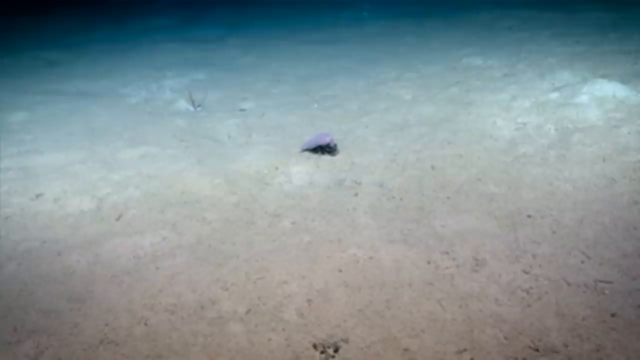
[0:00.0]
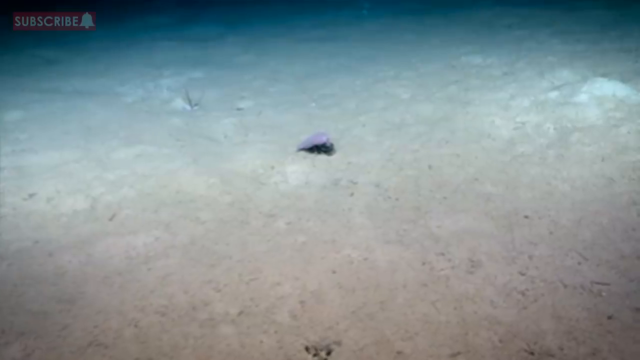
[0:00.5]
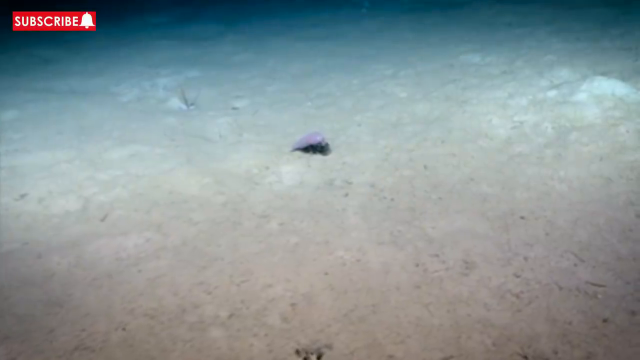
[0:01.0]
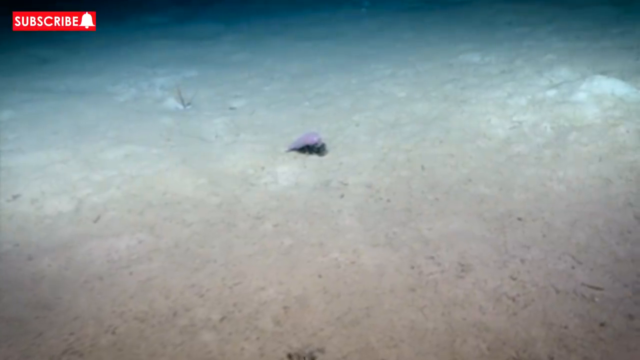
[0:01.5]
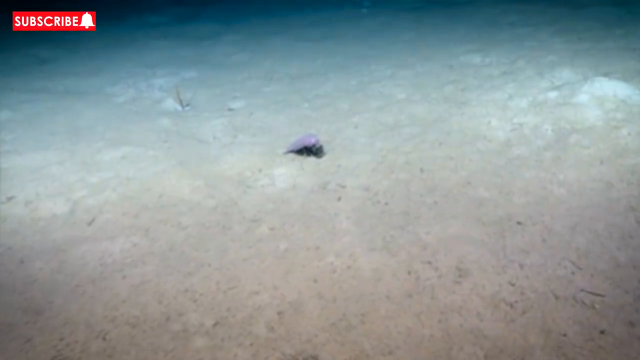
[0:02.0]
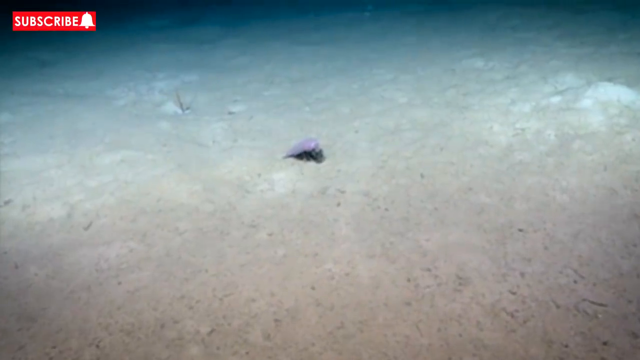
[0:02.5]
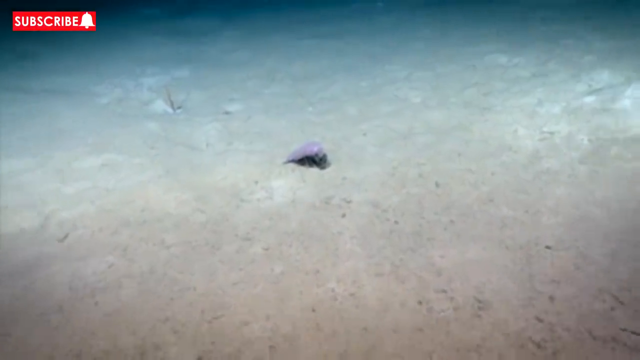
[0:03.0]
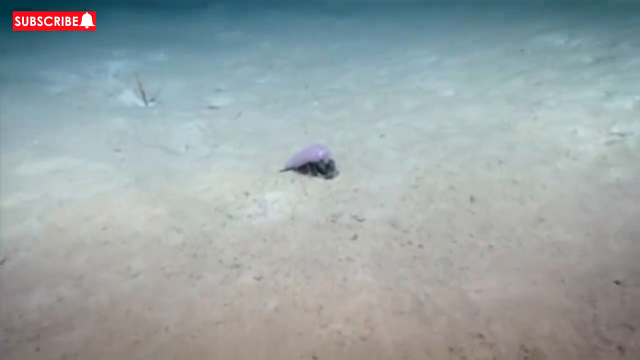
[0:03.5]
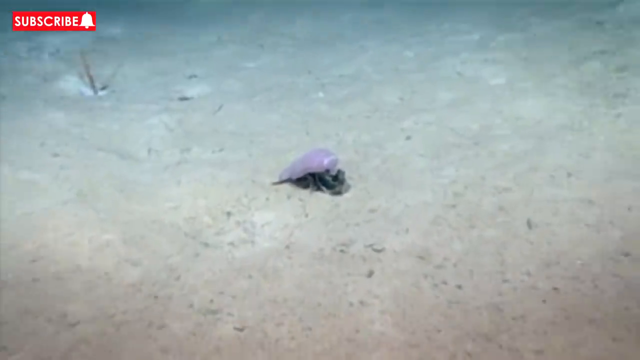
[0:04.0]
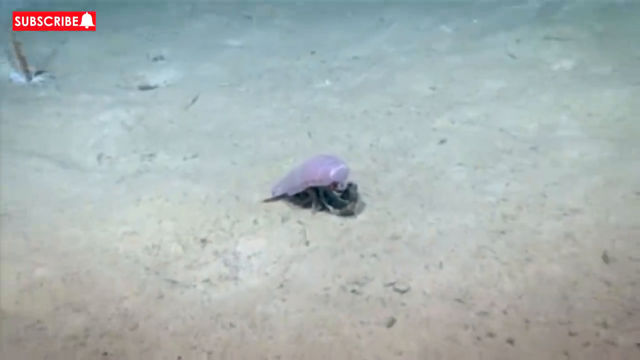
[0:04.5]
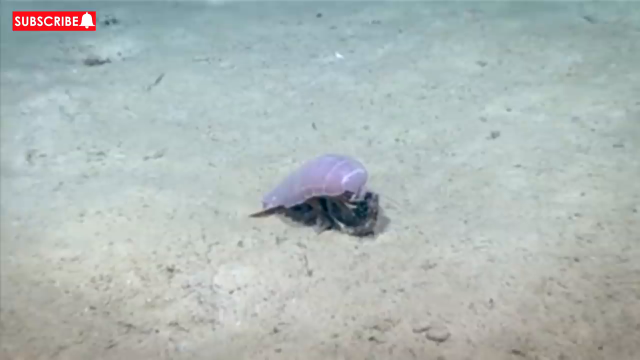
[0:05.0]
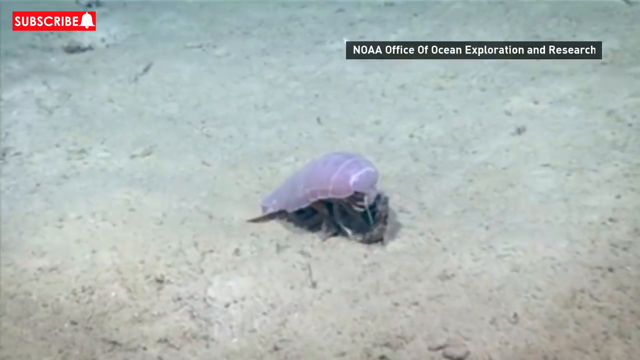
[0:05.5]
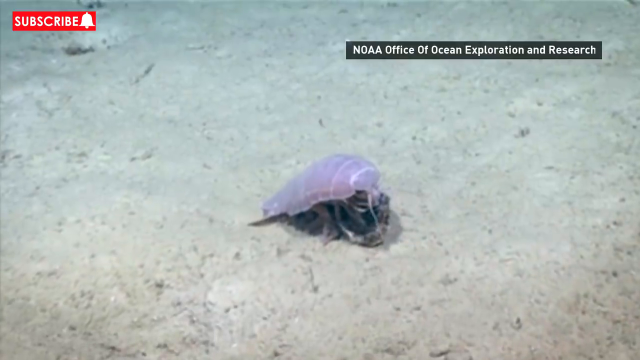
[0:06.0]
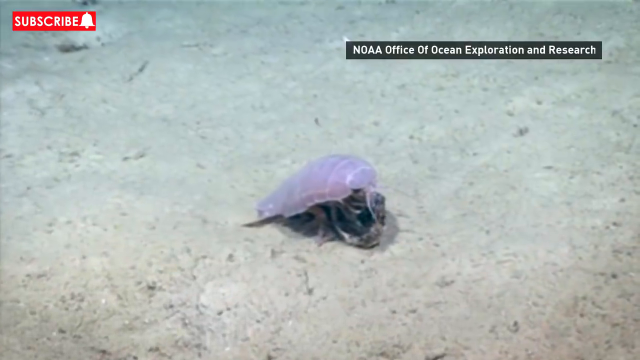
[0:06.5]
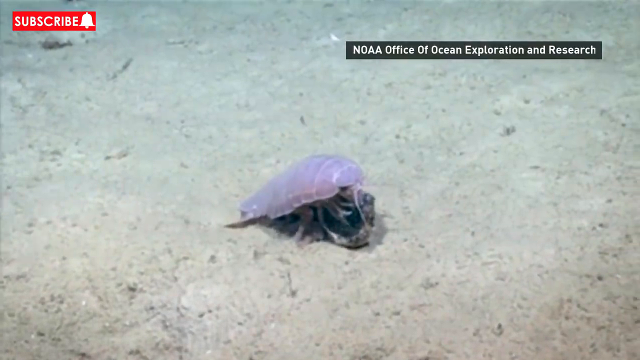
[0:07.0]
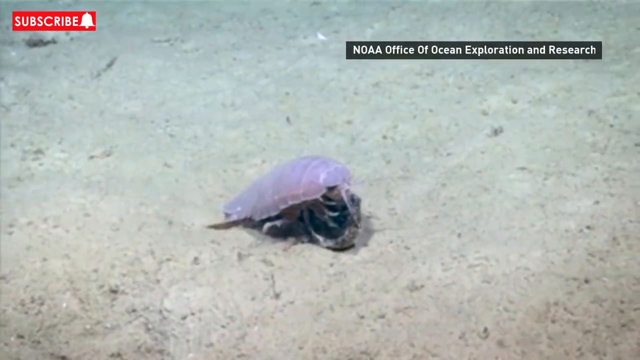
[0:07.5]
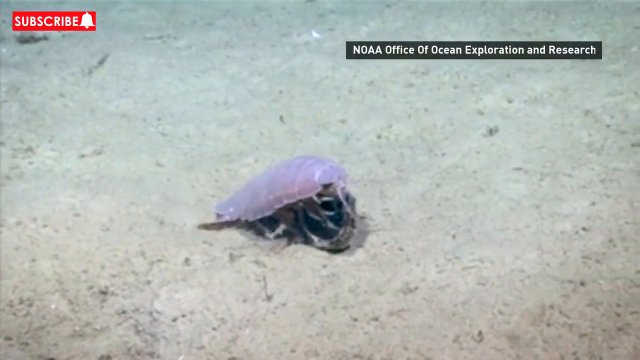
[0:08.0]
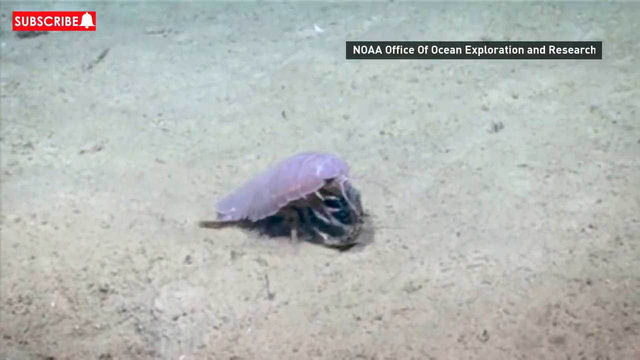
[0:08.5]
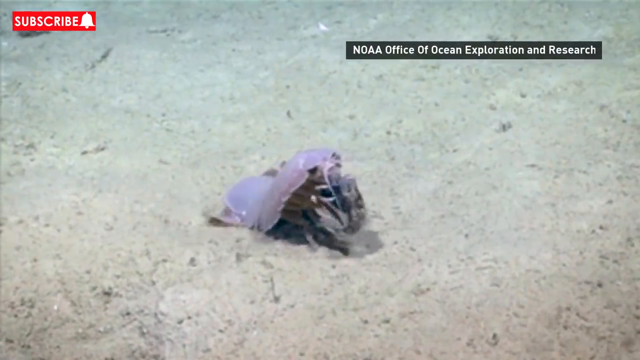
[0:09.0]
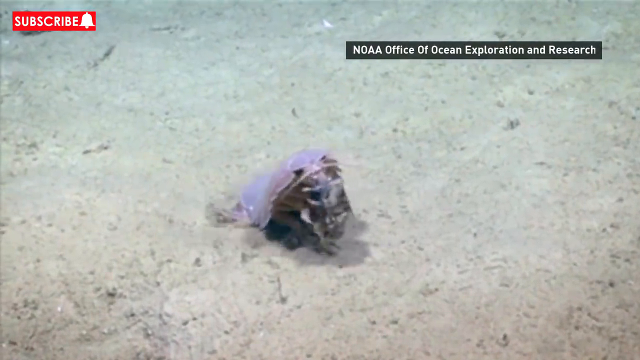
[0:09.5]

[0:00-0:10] The scene looks like the ocean floor, or perhaps a desert at night. A grey or lilac creature is on what looks like the seafloor. It has a hard shell with legs underneath, and the shell has different segments that can bend. The creature raises the front portion of its body upwards, showing sharp claw-like appendages clutching something at the front. The seabed has dimples or holes in it. Two tentacles protrude from the front of the shell. The sand moves slightly with the movement of the creature's legs. It raises something in its front claws and then faces the camera, revealing its underbody.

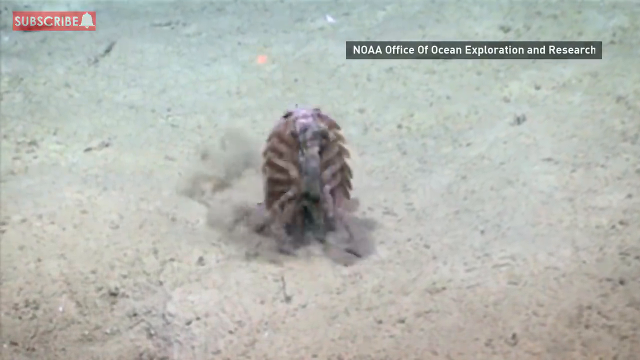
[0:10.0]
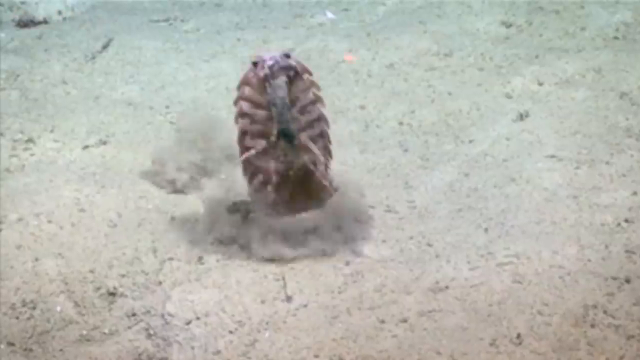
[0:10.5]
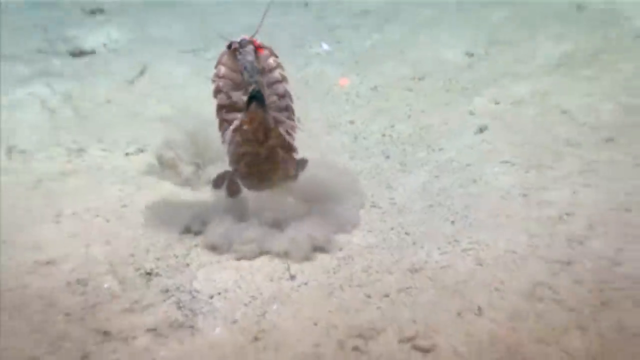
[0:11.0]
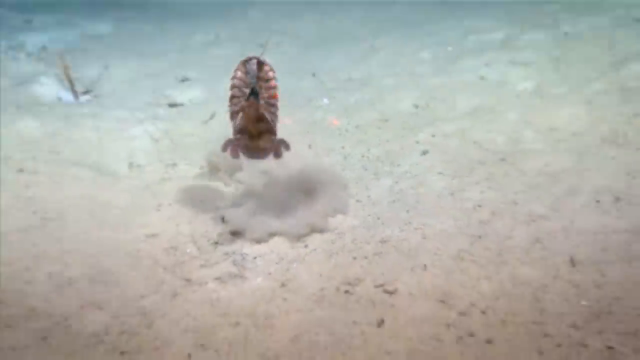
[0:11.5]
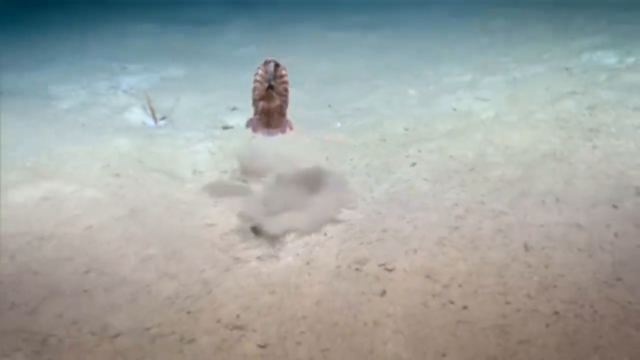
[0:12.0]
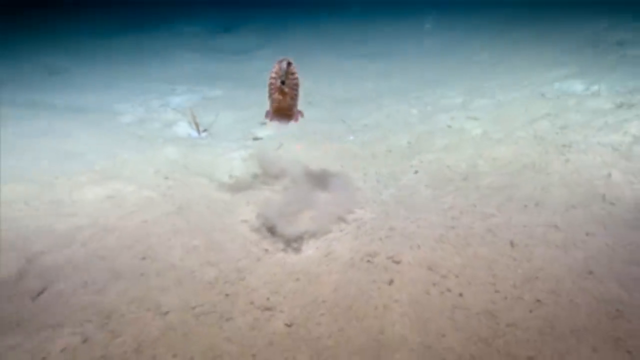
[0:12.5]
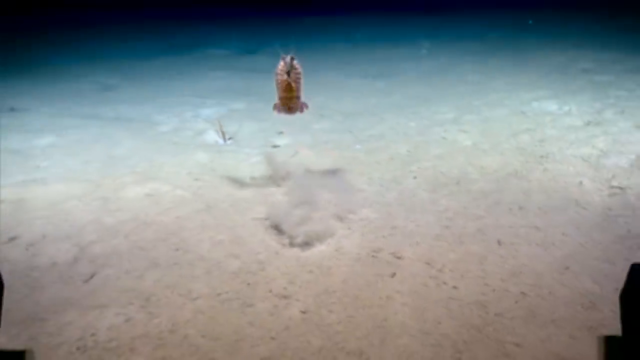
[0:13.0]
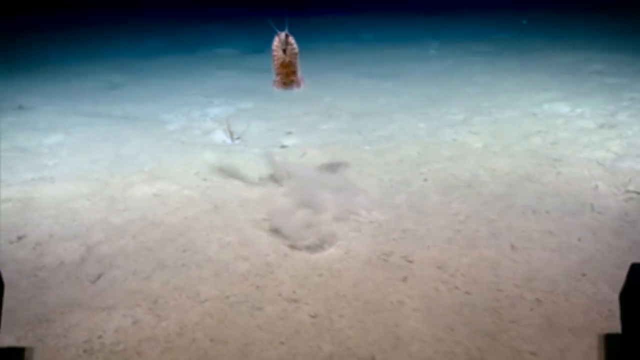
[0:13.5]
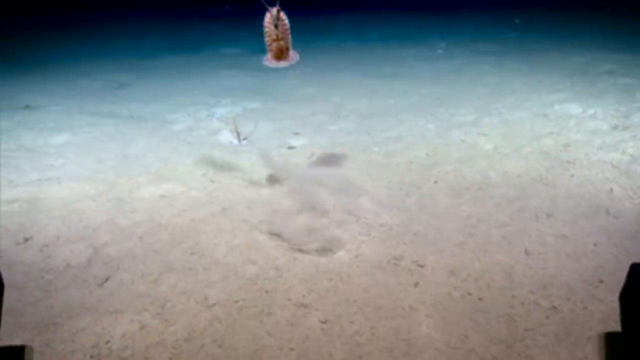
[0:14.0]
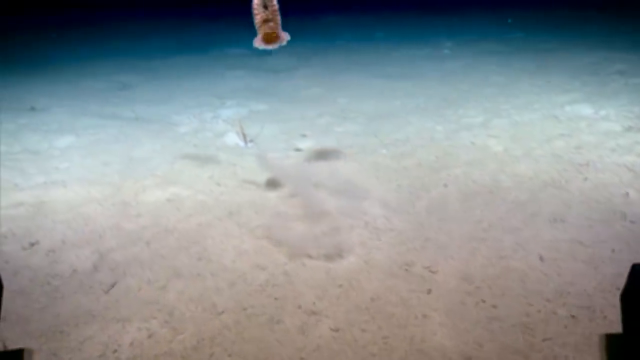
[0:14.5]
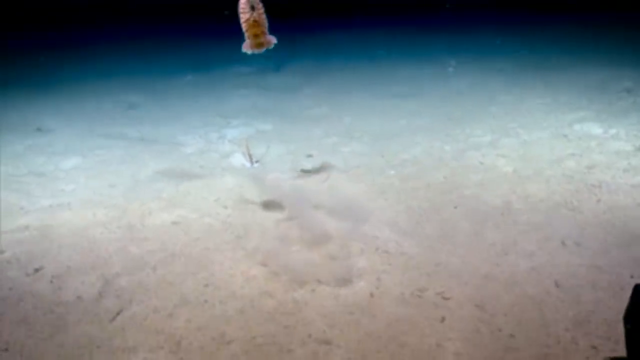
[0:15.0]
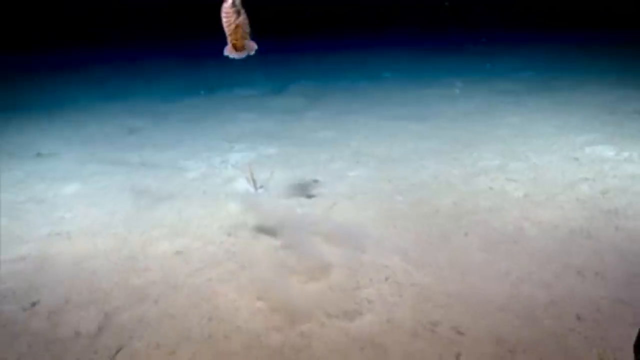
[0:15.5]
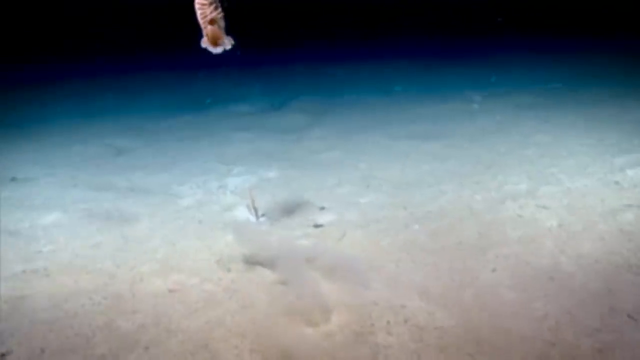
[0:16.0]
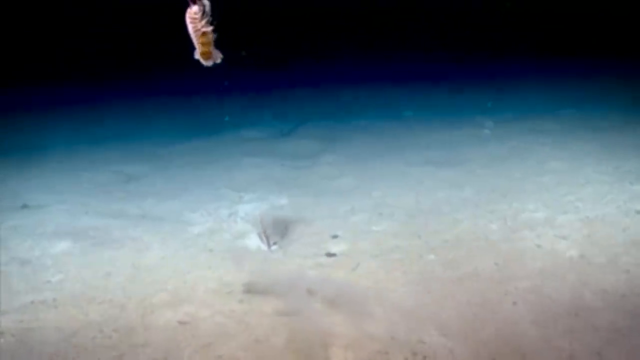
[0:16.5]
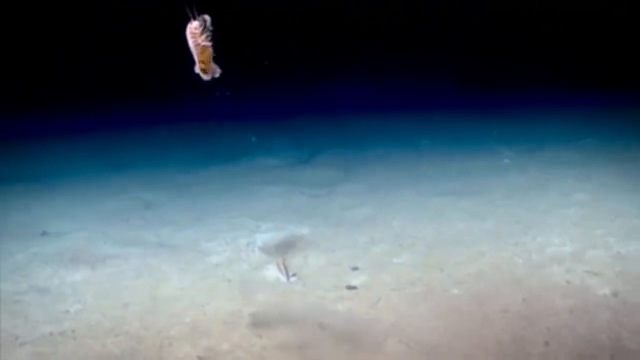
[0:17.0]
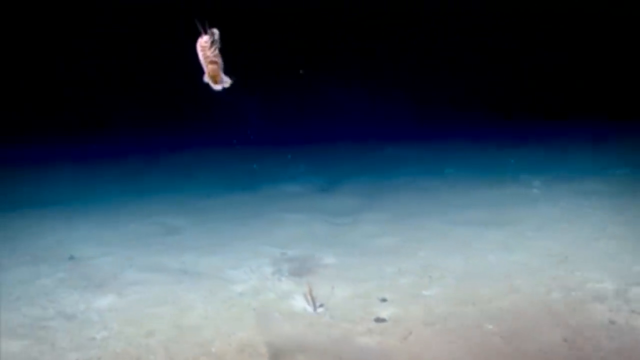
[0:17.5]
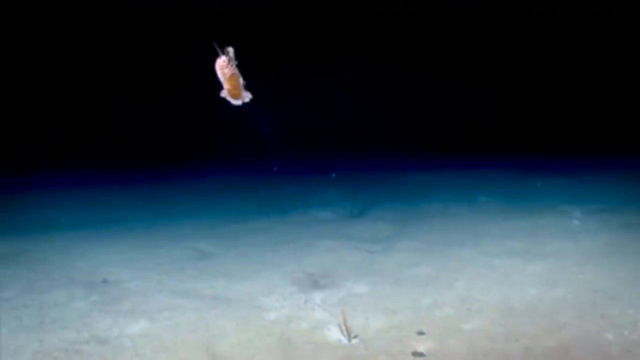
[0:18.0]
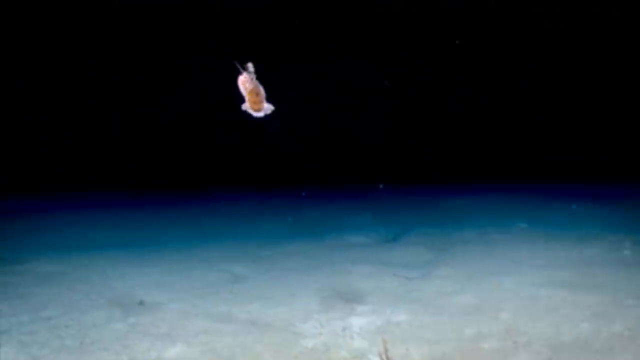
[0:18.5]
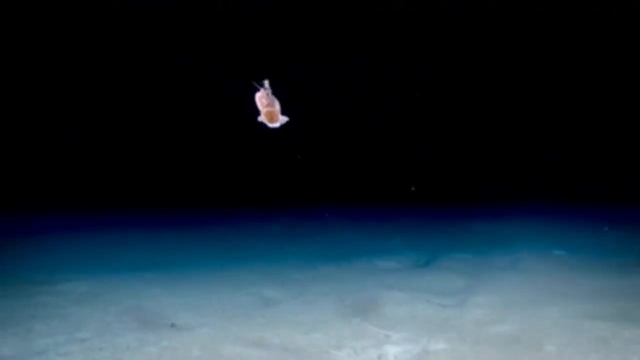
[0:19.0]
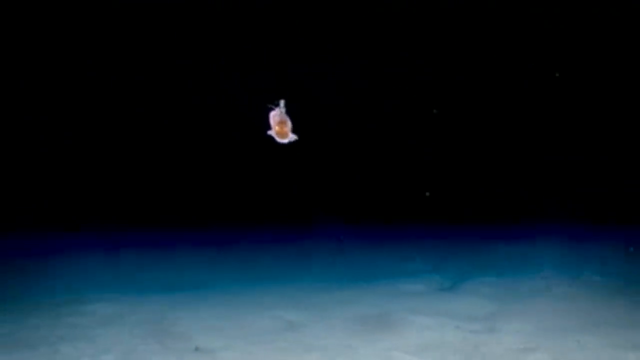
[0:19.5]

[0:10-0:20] The creature is on the sandy bottom of the seabed. The sand is disturbed in the water as it moves quickly and raises its body up to virtually a standing position. Its front eyes at the top are black and protrude from the shell. The segments underneath the shell and the legs are visible. It appears to have something in its front claws. It lifts itself completely off the sand and seabed and propels itself higher with movements of the lower part of its underbody. The front tentacles at the head are visible. It moves with a billowing action, its rear shell or tail feathered out, rising up into the darkness and glowing in the light of the camera.